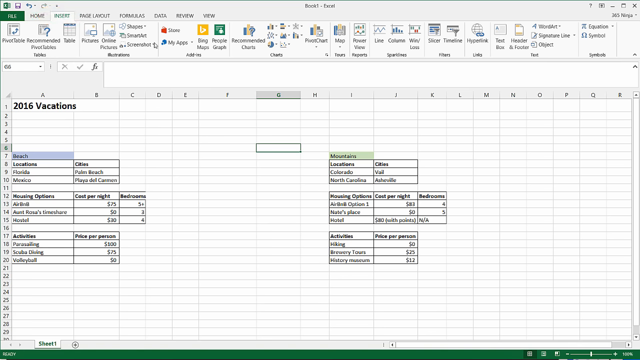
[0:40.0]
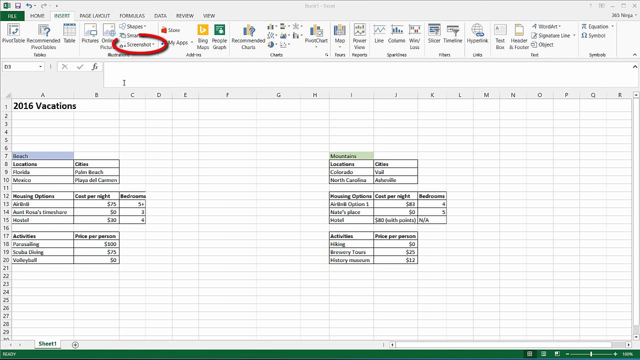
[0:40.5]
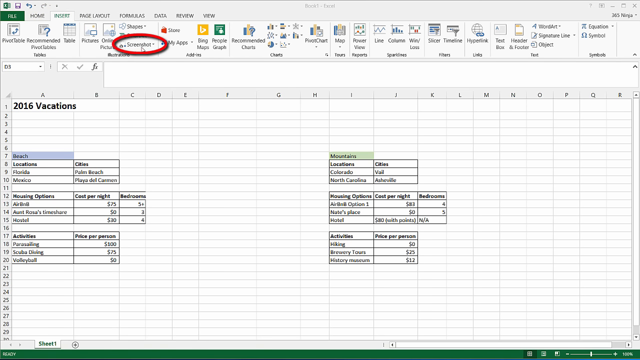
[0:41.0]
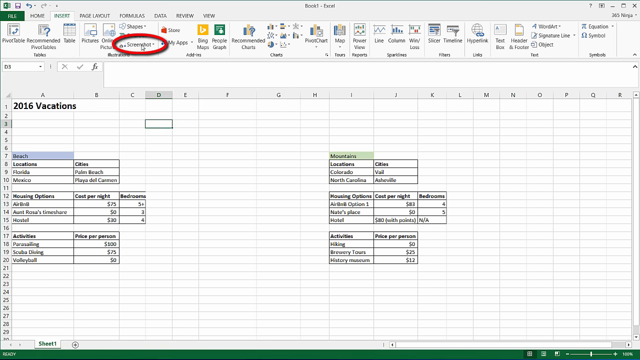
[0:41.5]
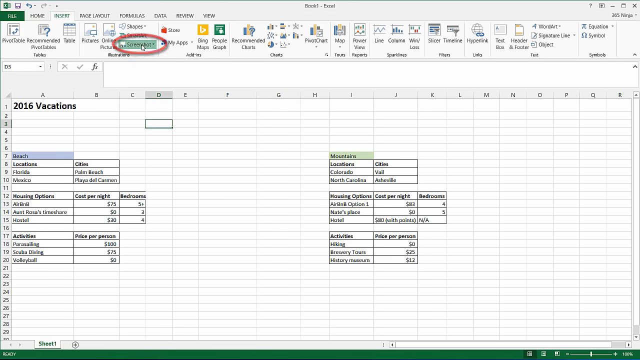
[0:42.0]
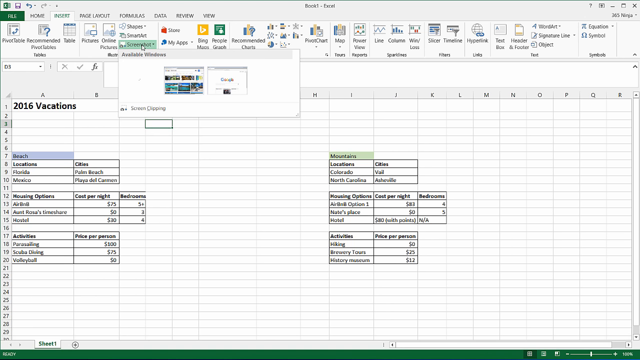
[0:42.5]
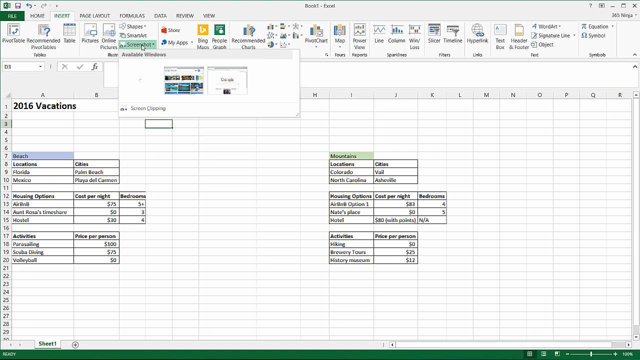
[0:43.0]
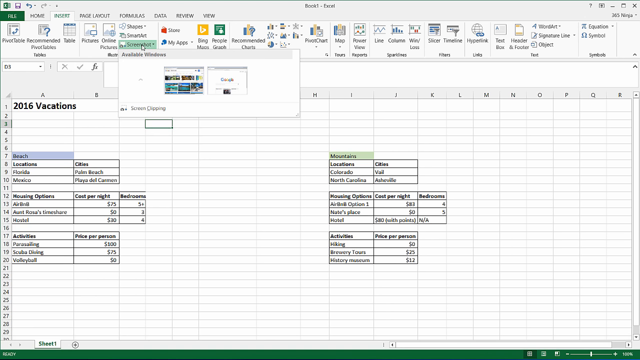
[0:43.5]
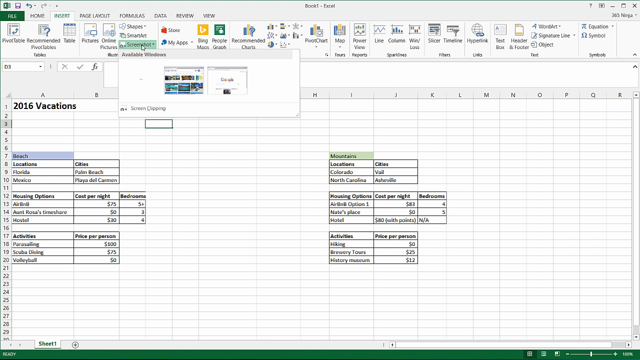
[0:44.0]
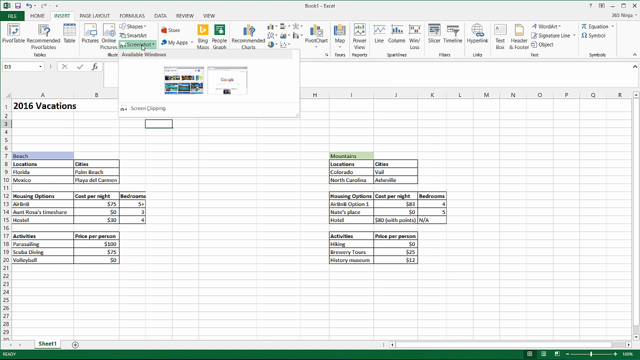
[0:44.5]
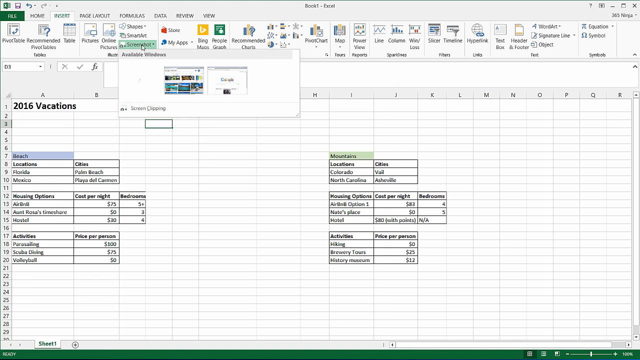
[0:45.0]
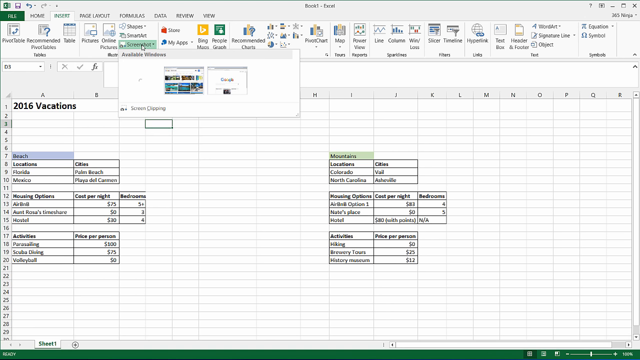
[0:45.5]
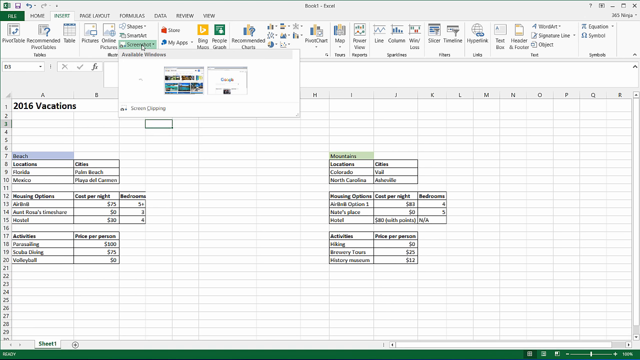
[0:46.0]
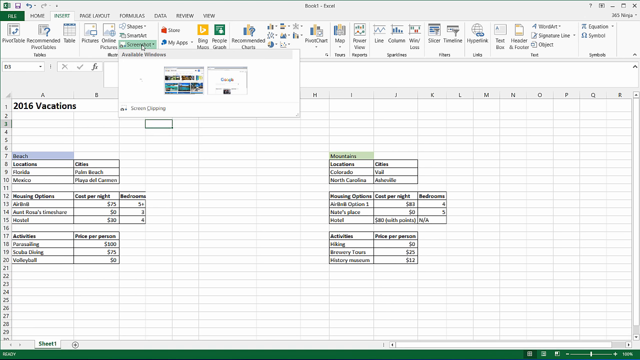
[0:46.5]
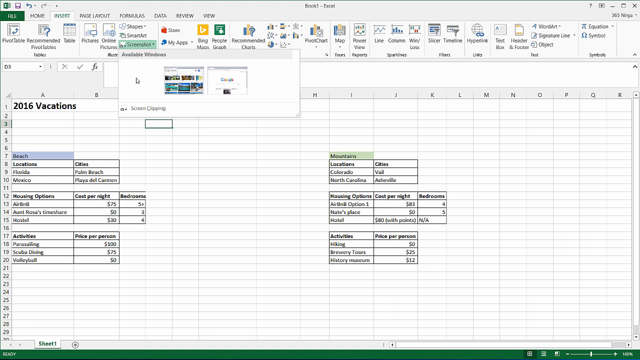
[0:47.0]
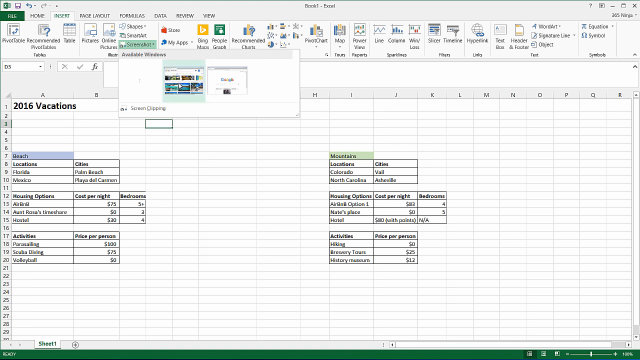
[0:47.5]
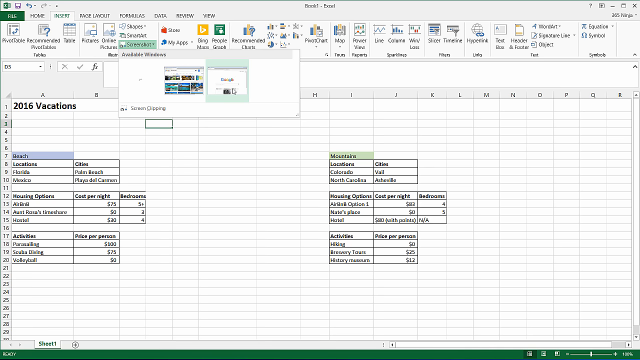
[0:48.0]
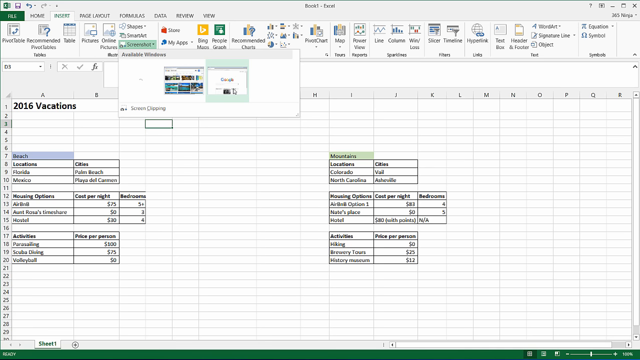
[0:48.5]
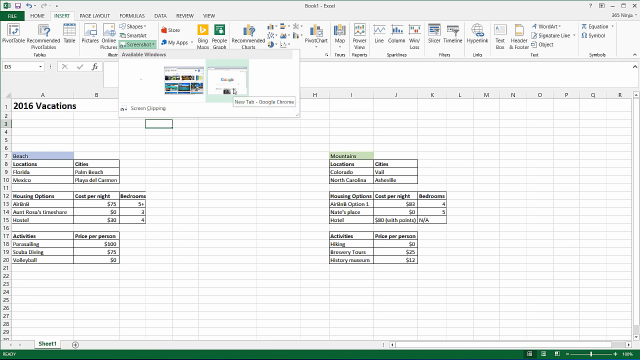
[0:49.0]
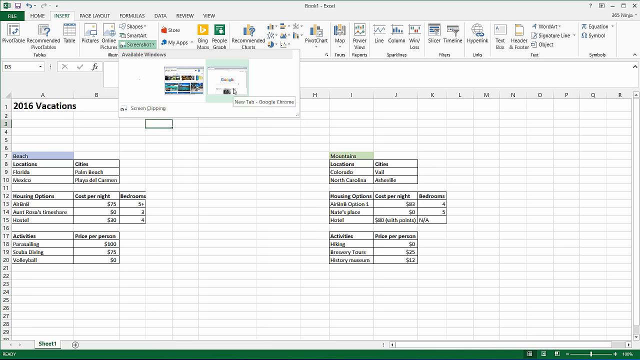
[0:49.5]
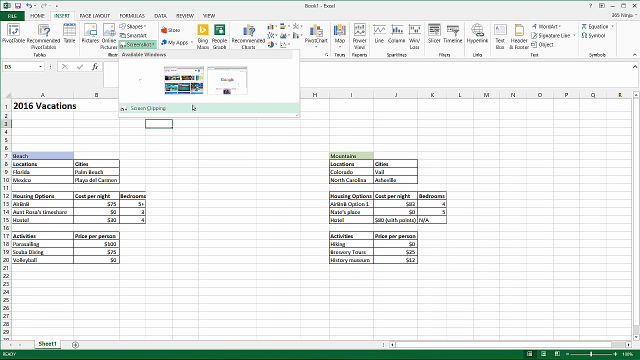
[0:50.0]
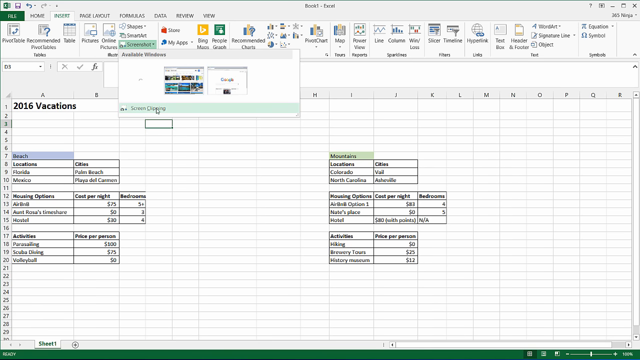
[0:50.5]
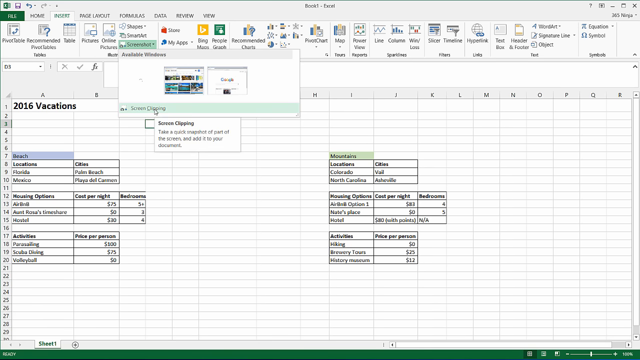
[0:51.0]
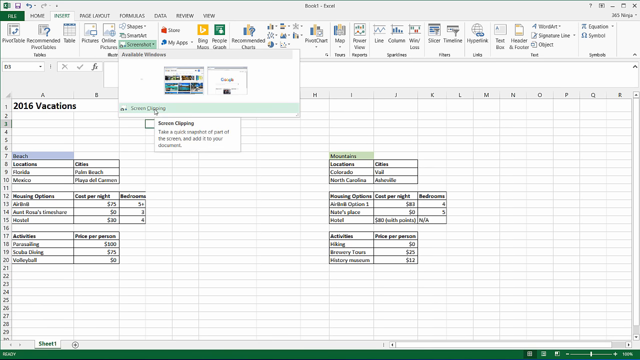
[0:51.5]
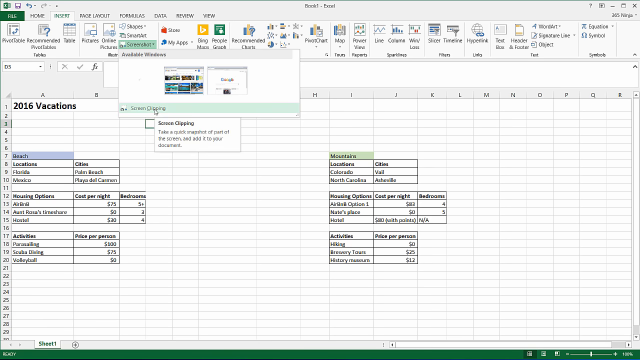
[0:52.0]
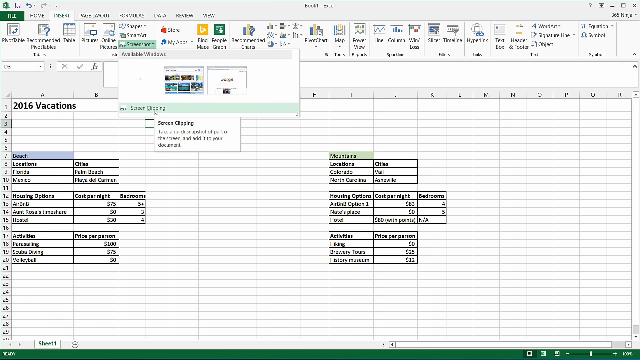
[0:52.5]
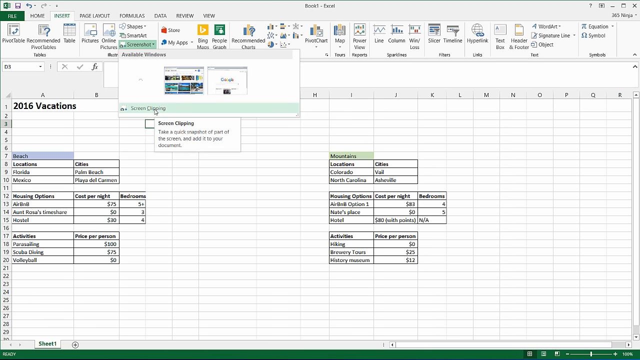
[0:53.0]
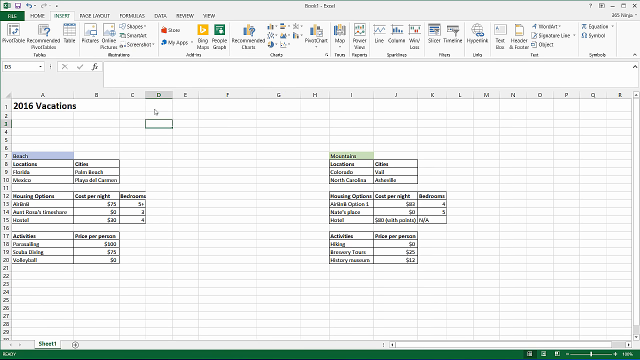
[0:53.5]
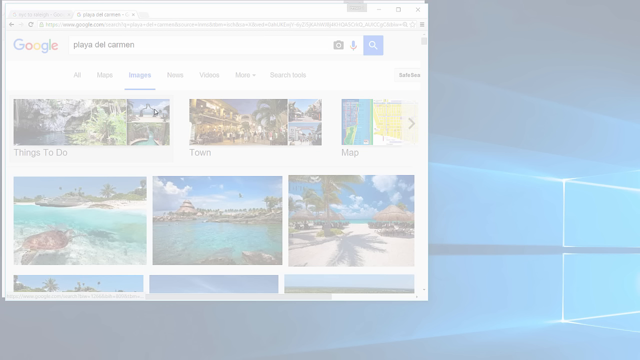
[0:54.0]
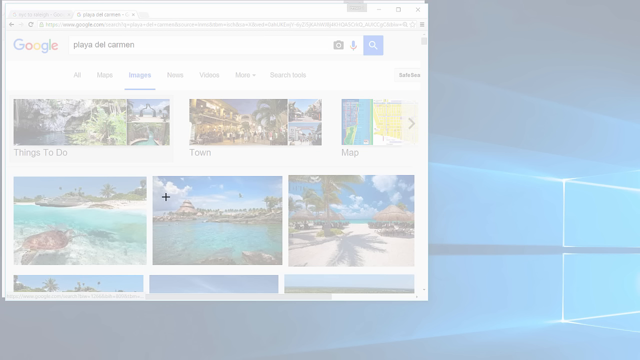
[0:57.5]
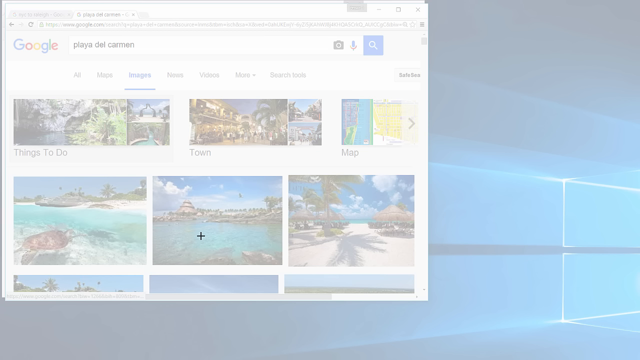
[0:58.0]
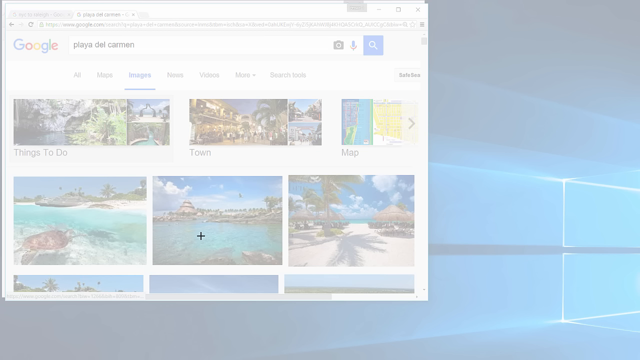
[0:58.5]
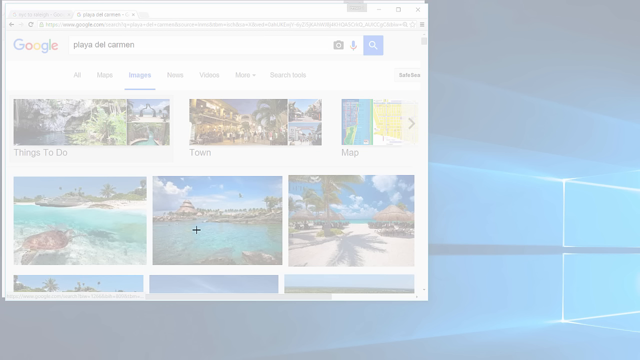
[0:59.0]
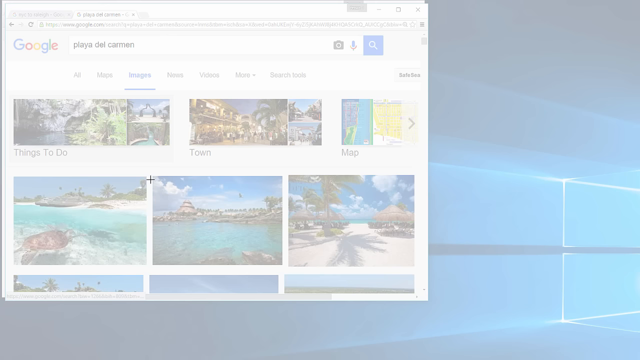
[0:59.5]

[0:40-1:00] The person planning the 2016 vacations keeps switching from one window to another. The other window shows pictures, apparently of the places where these vacations will be, including things to do: a beach with palm trees and a map of the location. The Google search bar reads "Playa del Carmen," which appears to be the beach vacation destination. The page shows things to do, the town, and the map, along with pictures of the beach from different angles, one of them showing a turtle, and sand.